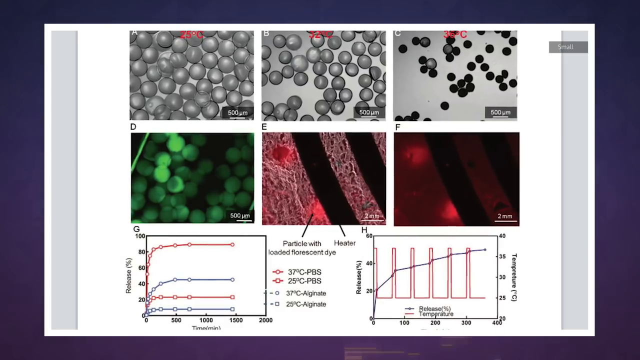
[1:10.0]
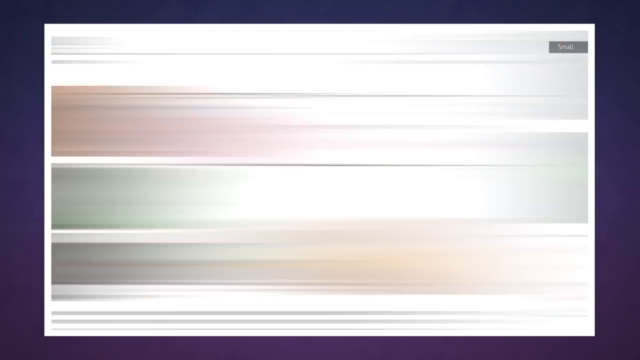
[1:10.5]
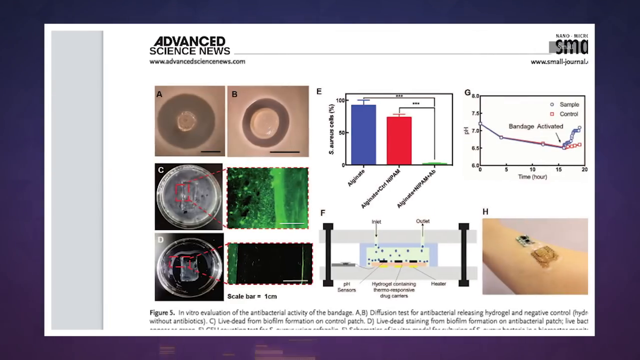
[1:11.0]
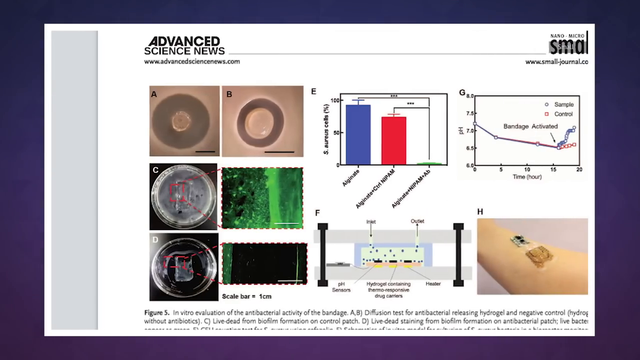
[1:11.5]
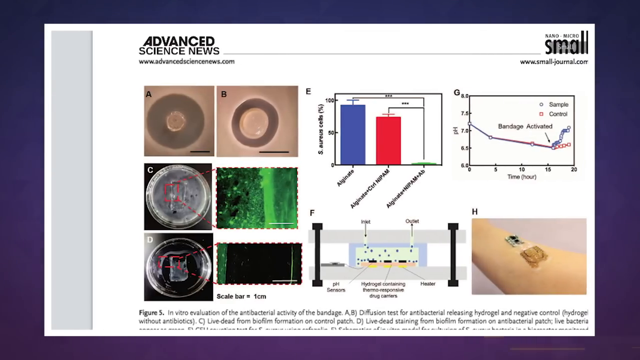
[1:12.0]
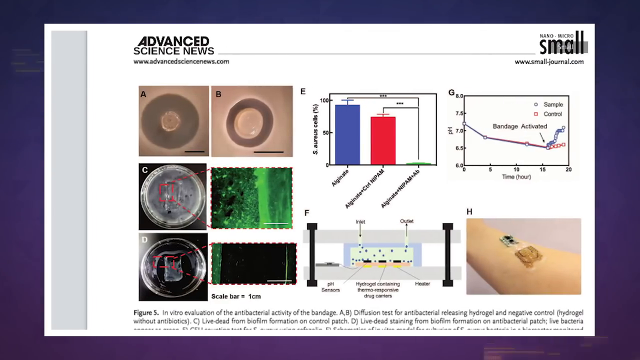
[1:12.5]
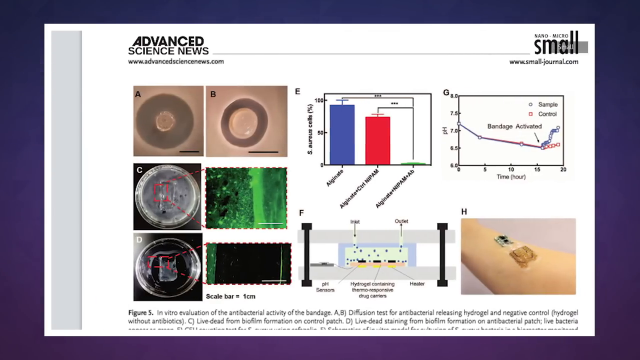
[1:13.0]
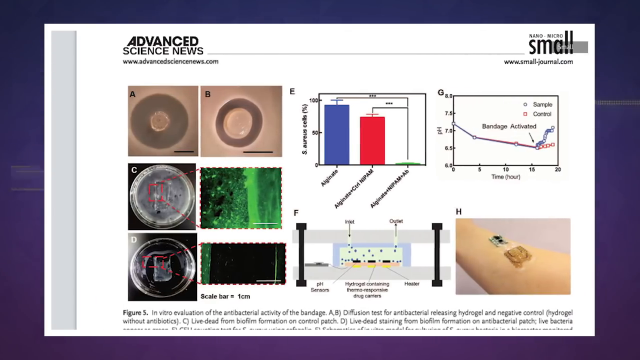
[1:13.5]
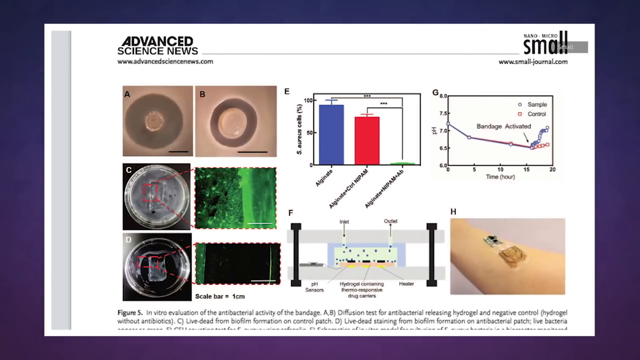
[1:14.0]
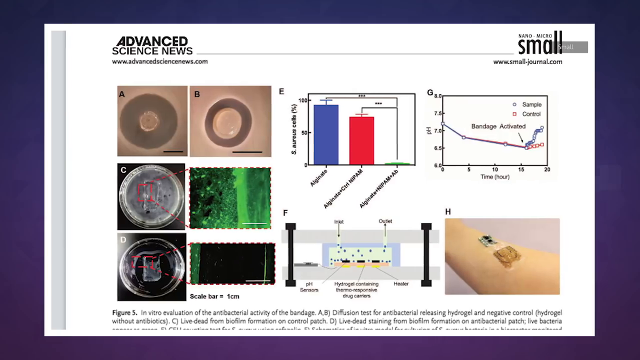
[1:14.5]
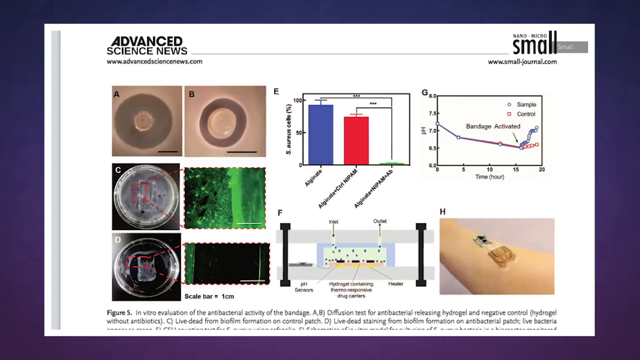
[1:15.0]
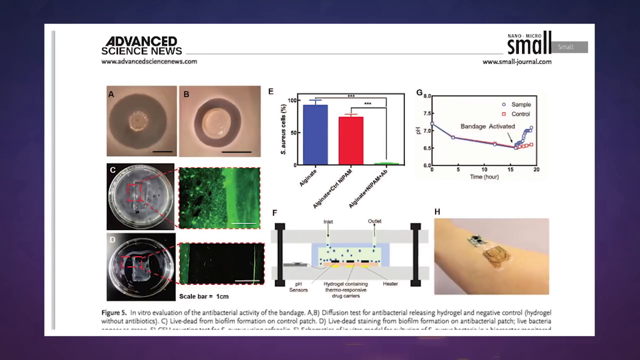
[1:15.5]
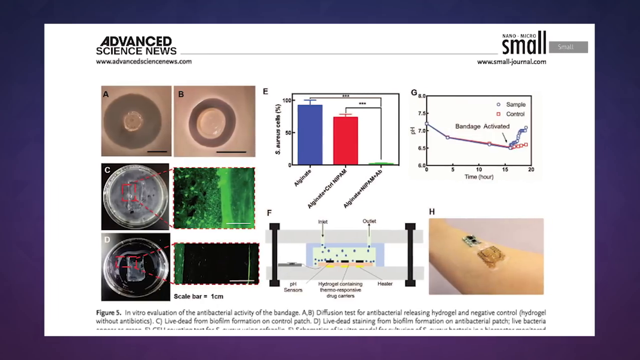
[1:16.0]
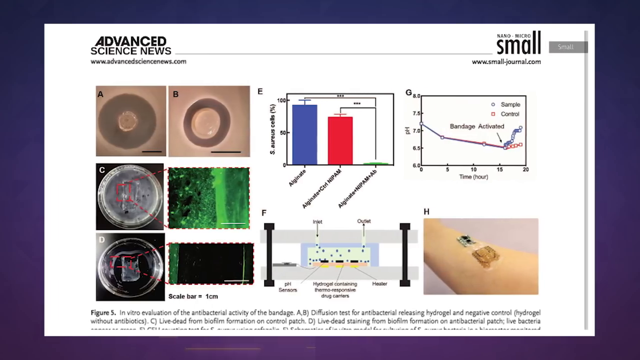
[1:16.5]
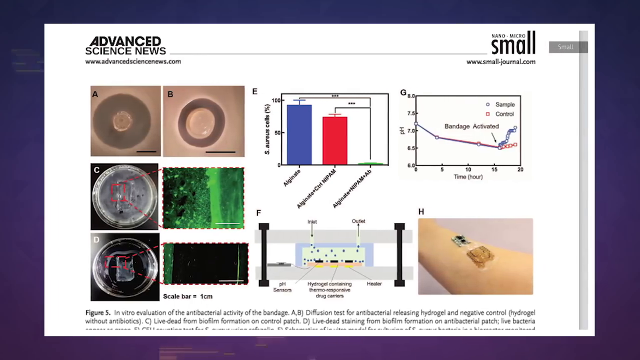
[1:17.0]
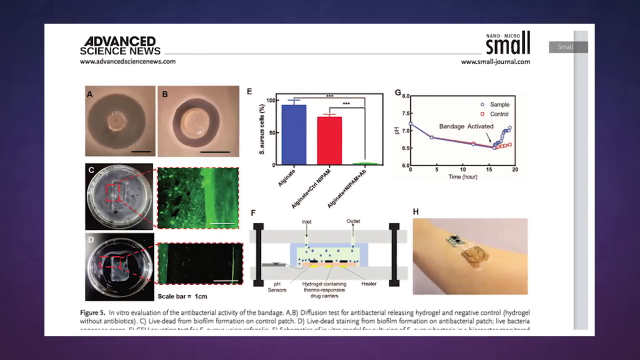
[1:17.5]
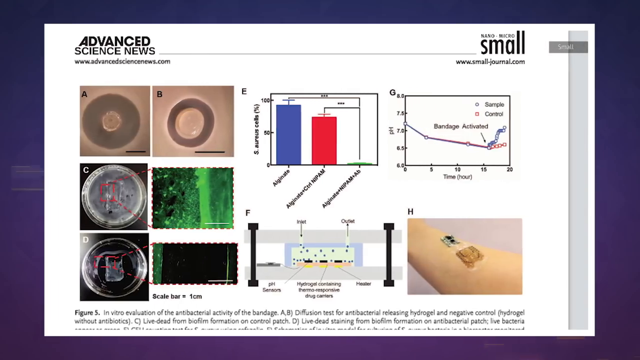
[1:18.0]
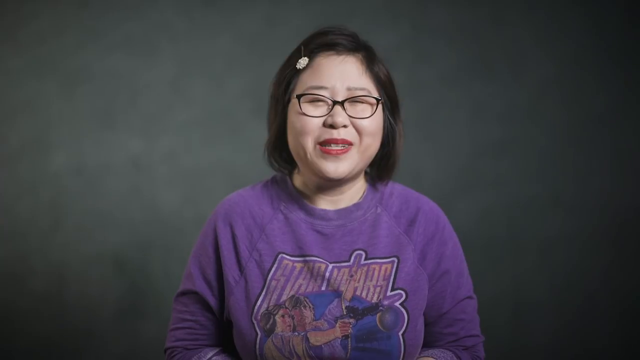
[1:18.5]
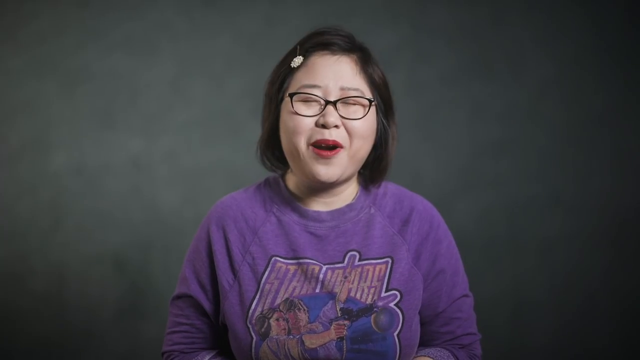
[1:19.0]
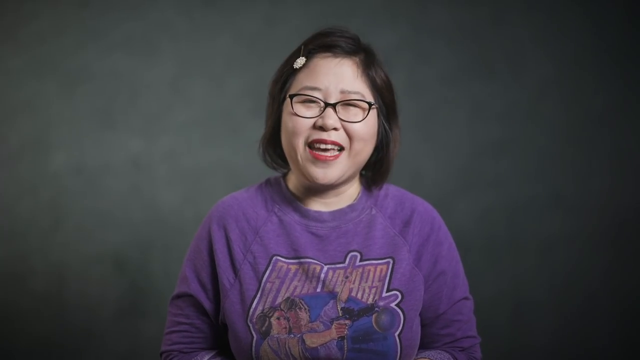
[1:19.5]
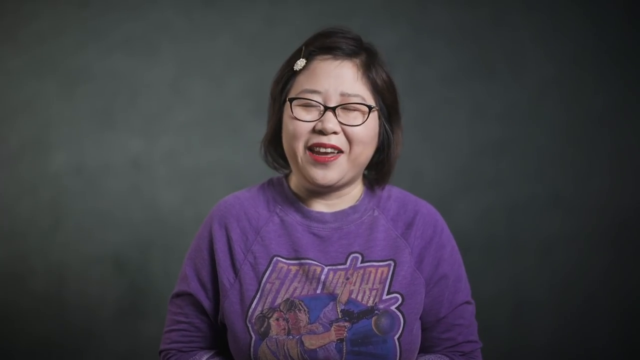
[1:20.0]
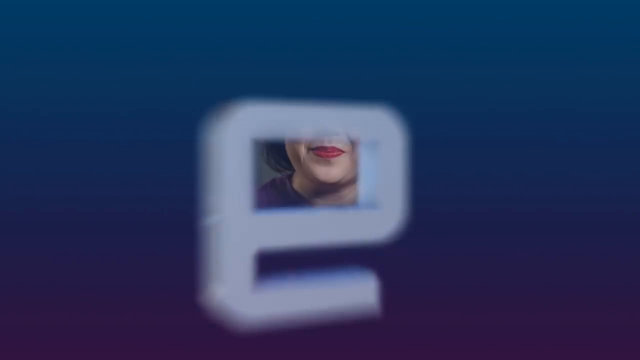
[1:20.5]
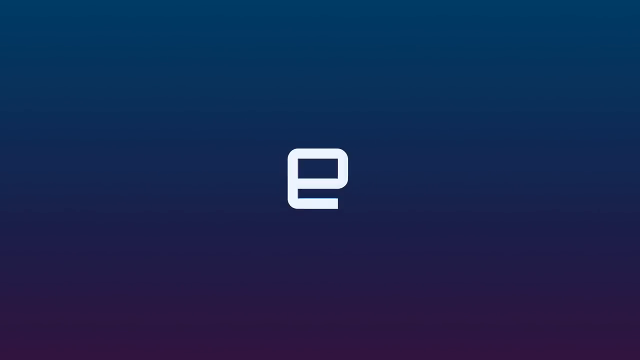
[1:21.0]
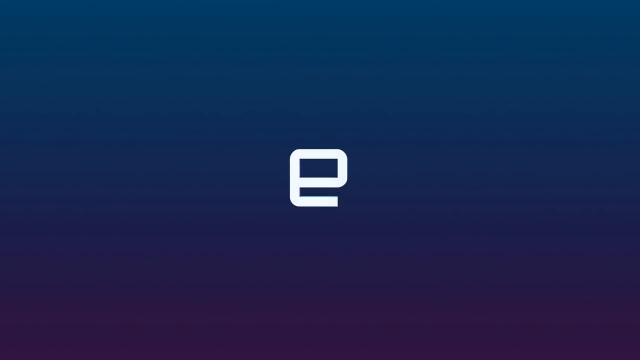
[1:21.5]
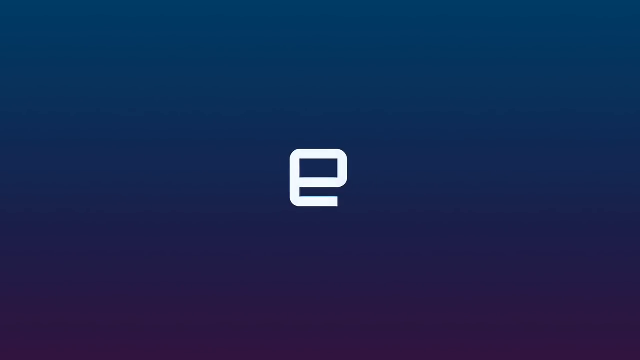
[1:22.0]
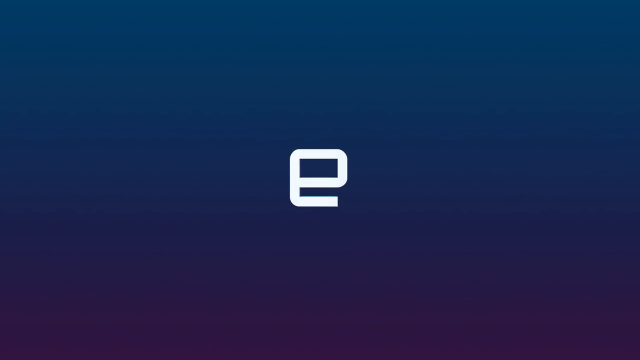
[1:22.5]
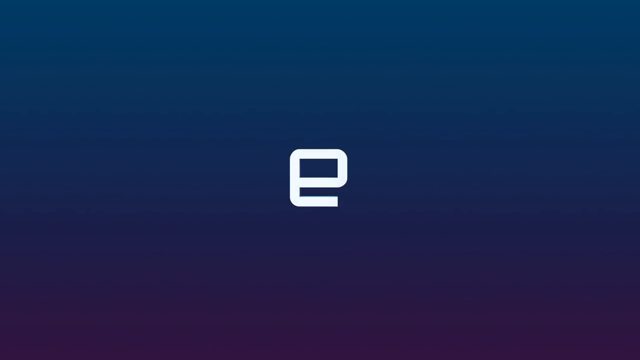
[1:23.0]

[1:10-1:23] Somewhat confusing imagery appears, possibly information about how the heating portion of the bandage works: gray circles and black circles at the top, green circles and red circles with black lines below, and some graphs. More graphics follow, with text at the bottom. The bottom image appears to relate to antibacterial hydrogels and biofilm, seemingly about preventing bacteria buildup, with what look like Petri dishes and graphs. At the top, text reads "Advanced Science News" along with a website, and on the right-hand side the word "small" and "smalljournal.com" appear. The video lingers on this series of graphics, then cuts back to the Asian woman in a purple Star Wars shirt, with dark glasses, reddish-pink lips and short hair, against a gray background. Finally, a blue and purple gradient comes up on screen with a white E.